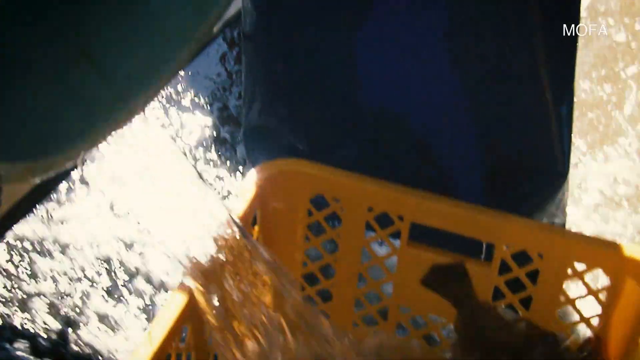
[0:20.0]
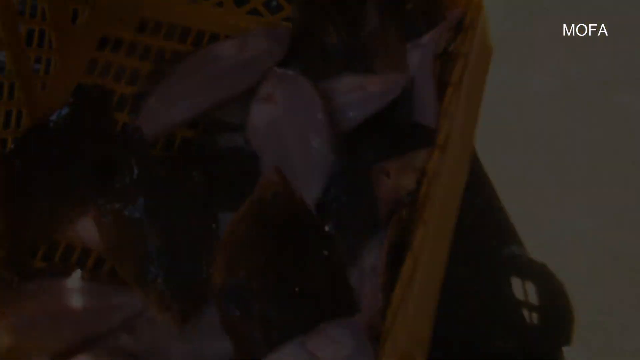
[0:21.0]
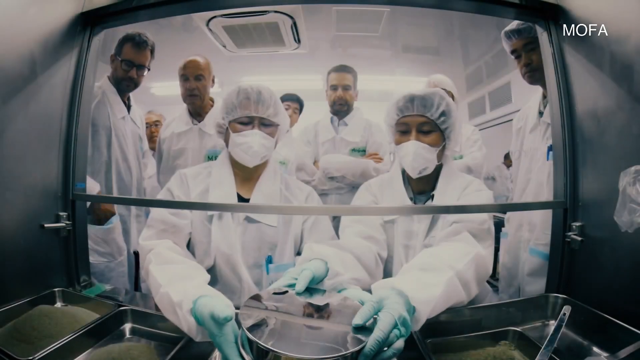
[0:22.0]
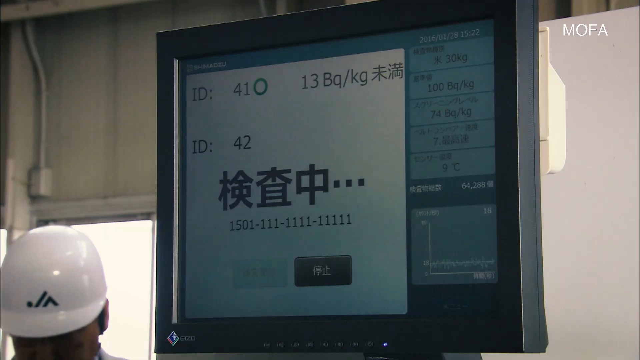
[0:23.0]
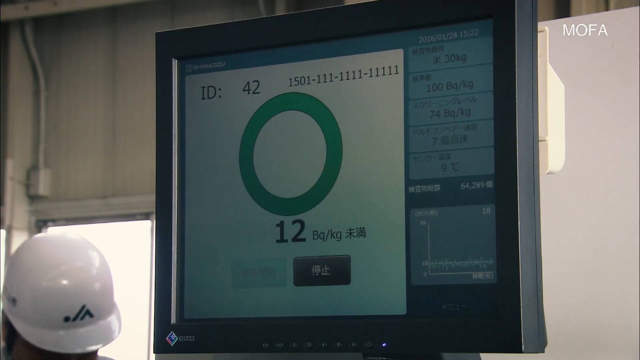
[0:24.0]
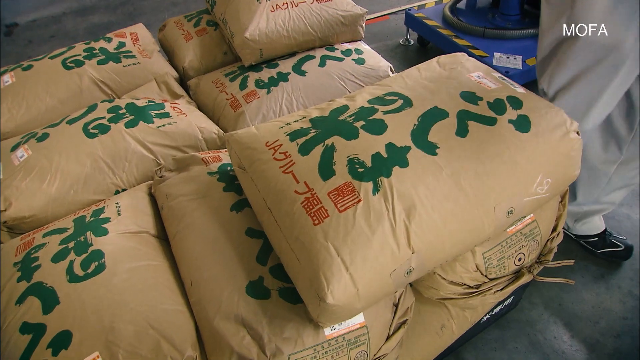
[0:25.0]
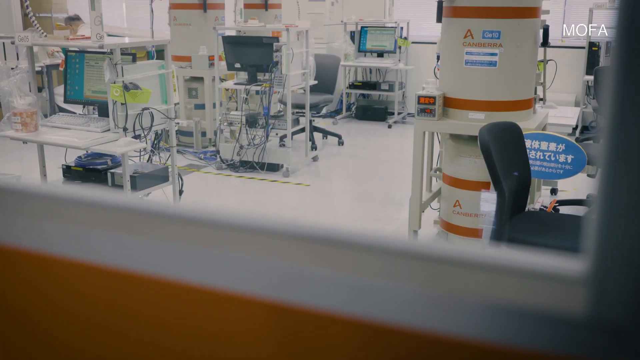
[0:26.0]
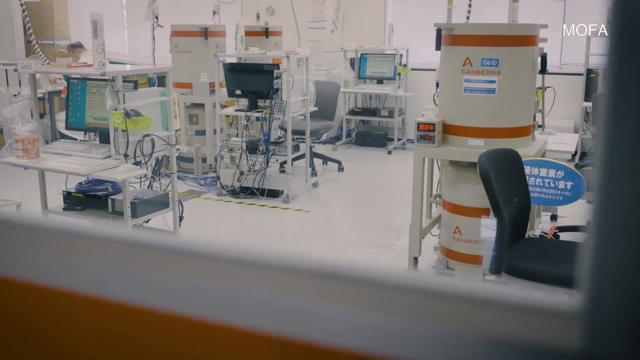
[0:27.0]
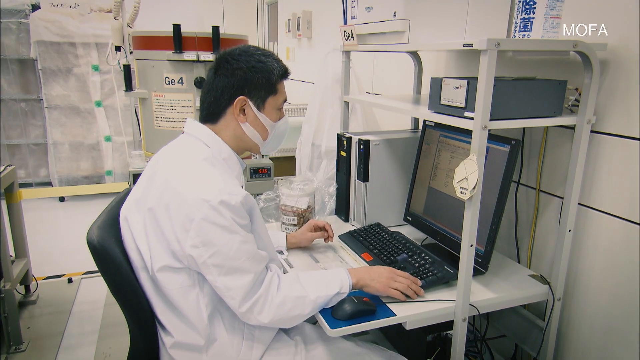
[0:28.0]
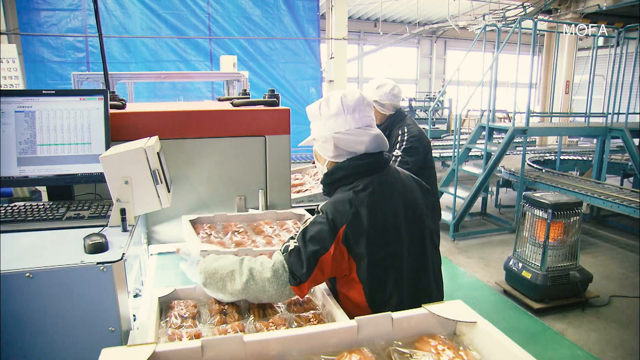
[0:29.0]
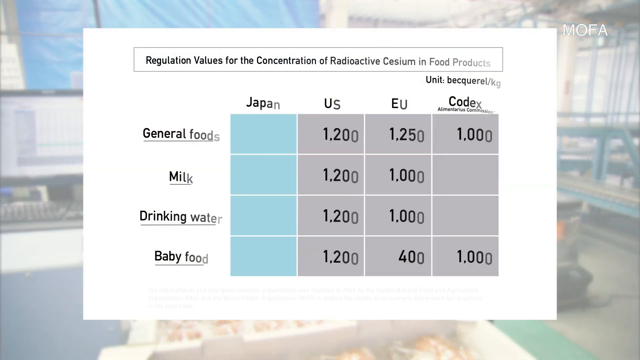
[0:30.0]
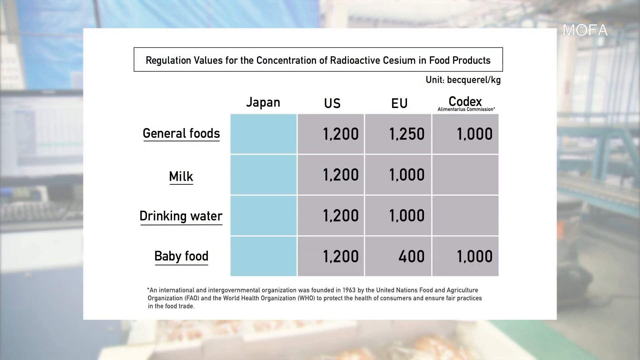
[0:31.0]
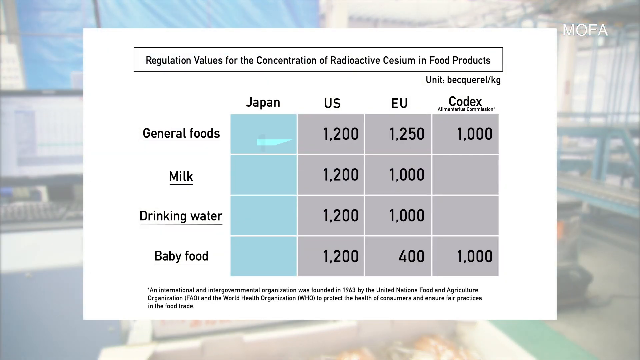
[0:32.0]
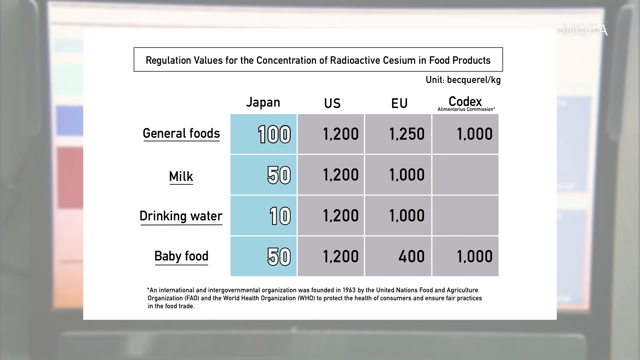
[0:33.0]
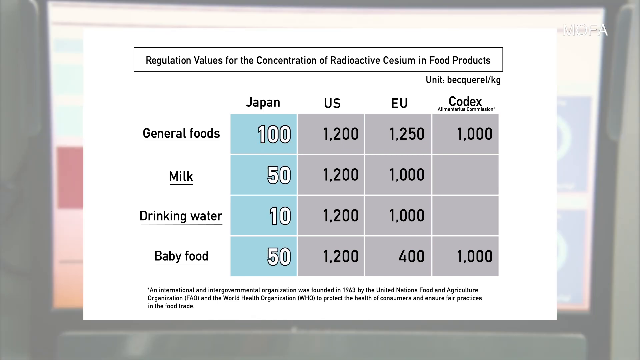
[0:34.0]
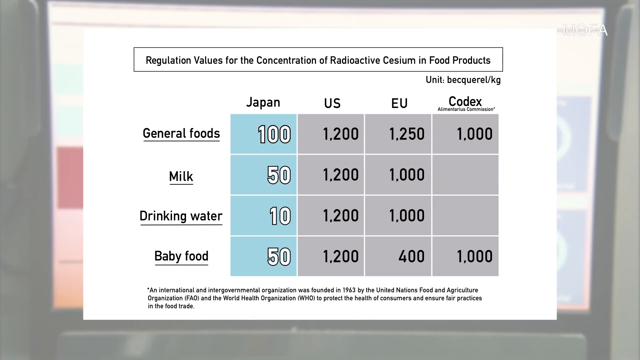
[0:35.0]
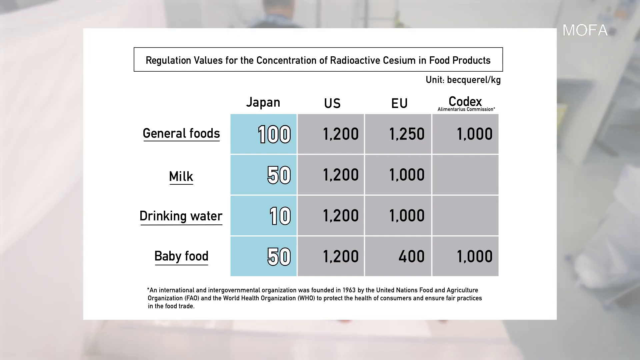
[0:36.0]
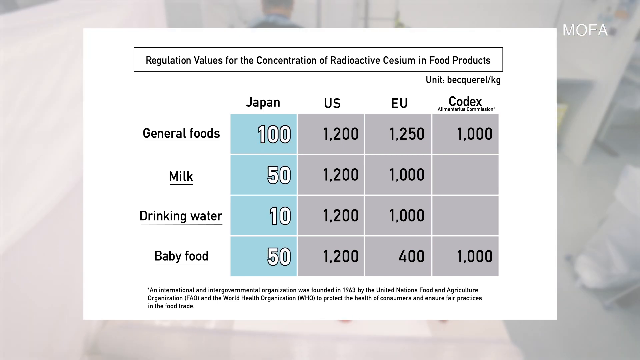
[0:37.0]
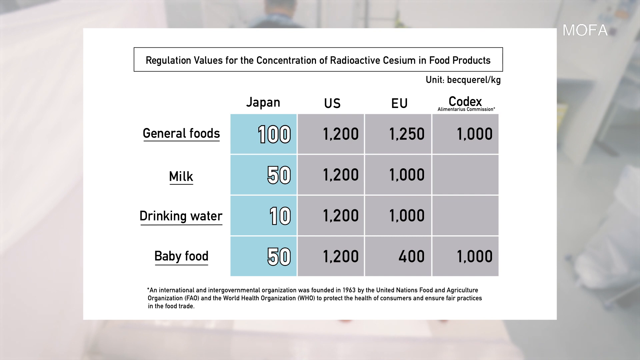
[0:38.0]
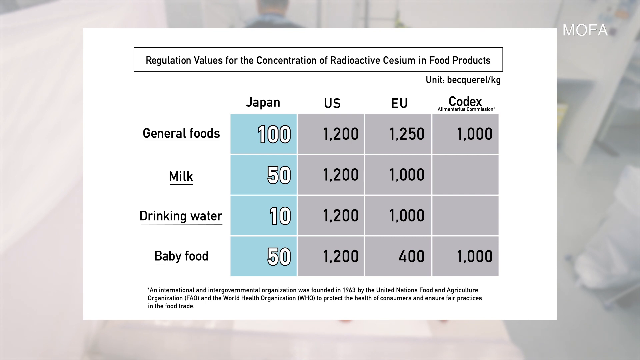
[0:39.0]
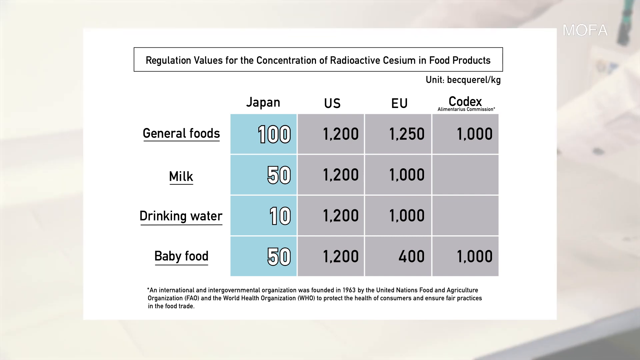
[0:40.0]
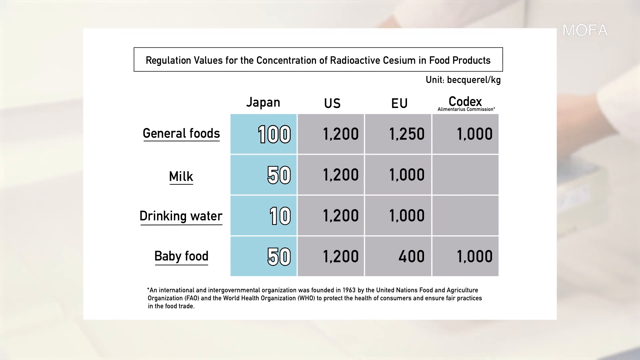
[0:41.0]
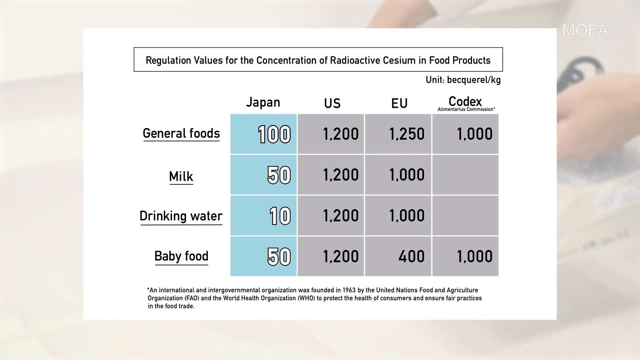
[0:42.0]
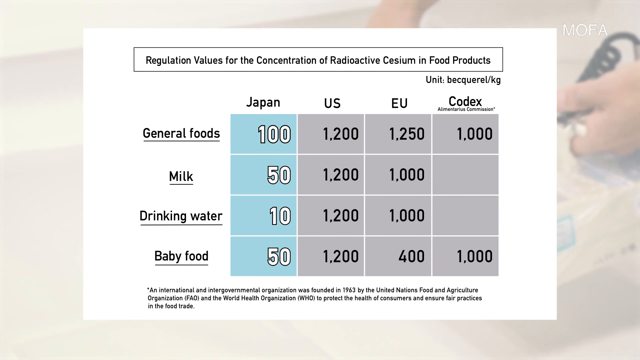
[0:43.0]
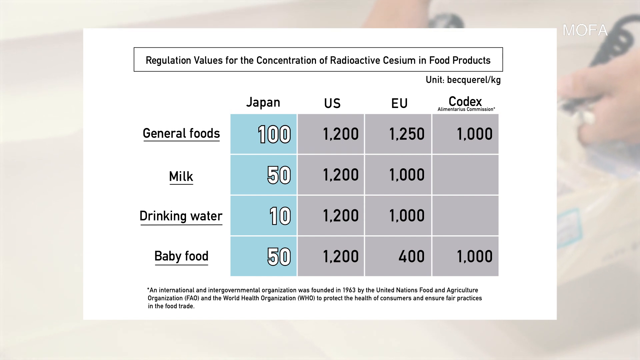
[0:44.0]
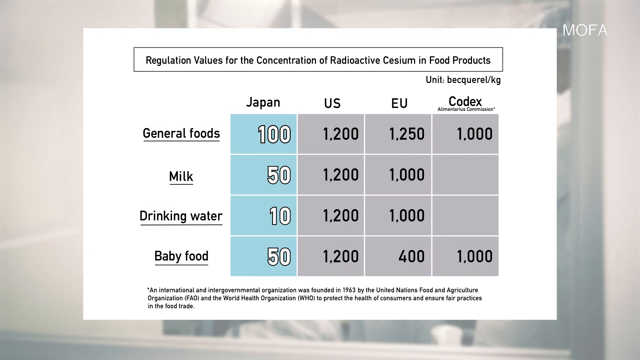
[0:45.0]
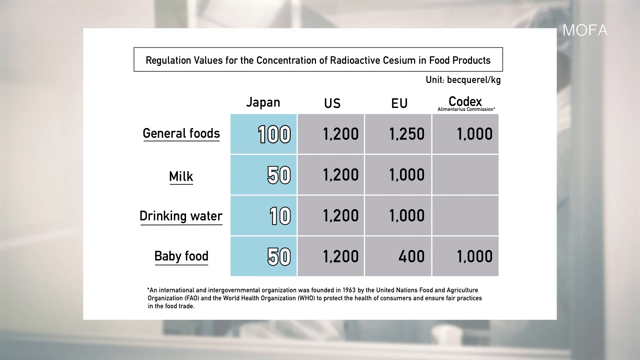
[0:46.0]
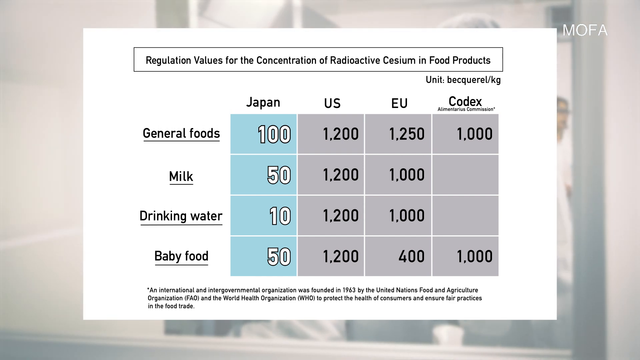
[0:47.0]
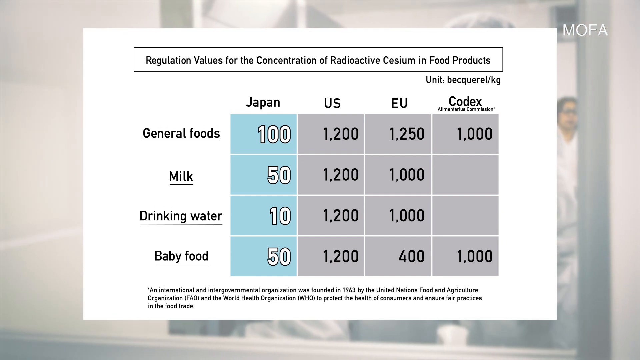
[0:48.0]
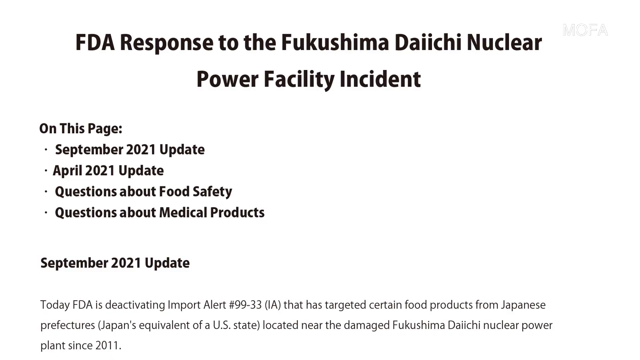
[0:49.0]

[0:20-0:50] A group of people who appear to be medical or lab workers all wear white lab coats. The two closest to the camera sit and wear hairnets and masks as they handle something unidentified, while the others stand behind them, watching very anxiously. A computer monitor then shows "ID 42" followed by a string of numbers, a green circle, and beneath it "12 BQ/KG", along with two buttons. Next come brown bags with writing in an unidentified foreign language, possibly containing wheat, flour or rice. A view looking into a lab center shows computers, cords, chairs and various kinds of machinery. A man types at a computer, and then some people use a big container to move things. A chart appears with columns for Japan, the US, the EU and Codex, and text beginning "regulation values for the". The Japan column is at first all blue with nothing listed. For general foods, the US is 12,000, the EU 12,000 and Codex 1000; for milk, the US is 12,000, the EU 1000 and Codex blank; for drinking water, the US is 12,000, the EU 1000 and Codex blank; for baby food, the US is 12,000, the EU 400 and Codex 1000. Numbers then pop up in the Japan column: 100 for general foods, 50 for milk, 10 for drinking water and 50 for baby food. The video then moves to a different page related to the FDA.